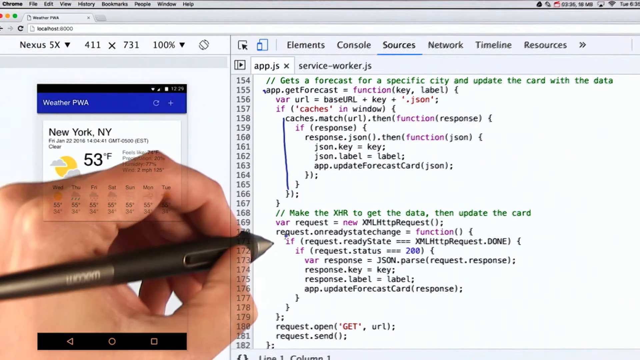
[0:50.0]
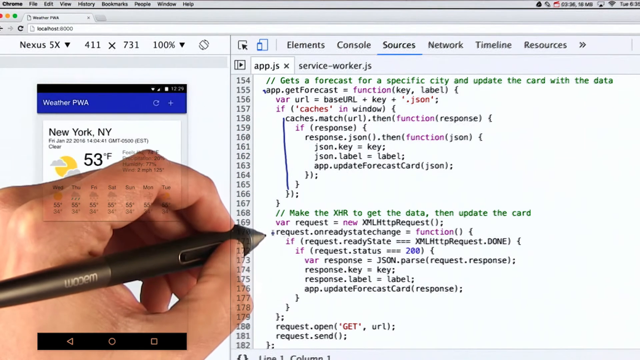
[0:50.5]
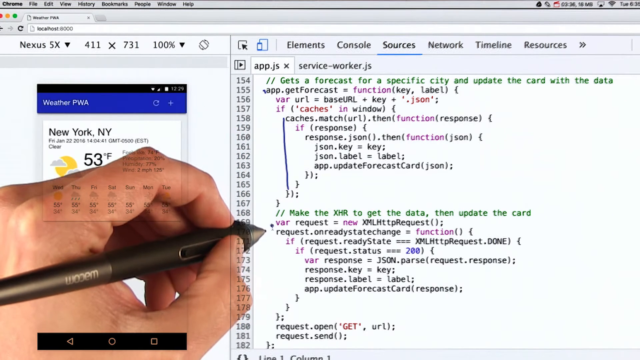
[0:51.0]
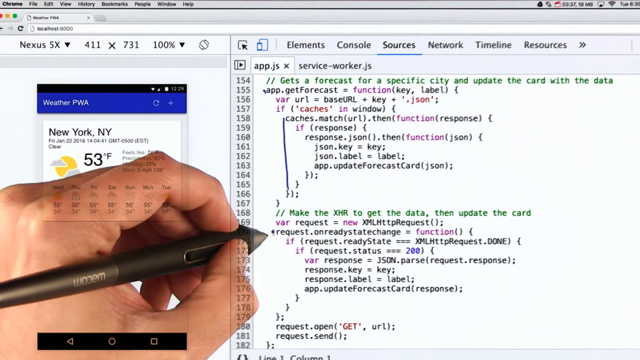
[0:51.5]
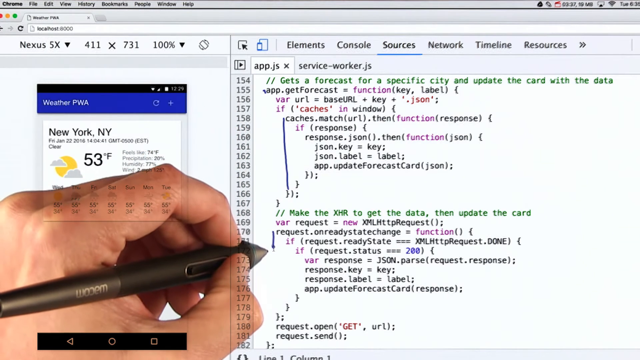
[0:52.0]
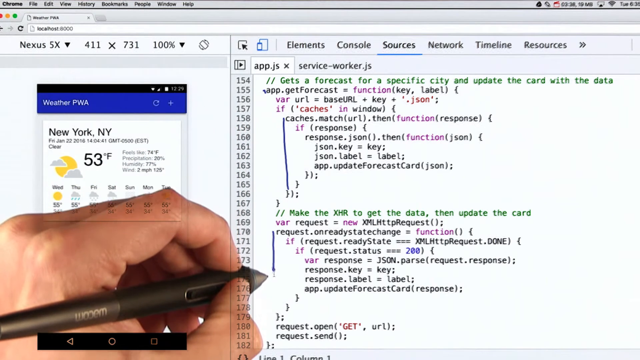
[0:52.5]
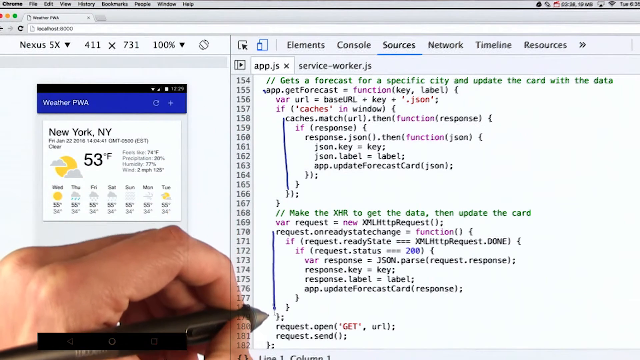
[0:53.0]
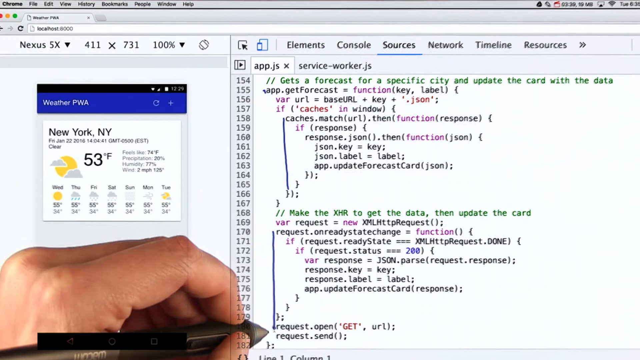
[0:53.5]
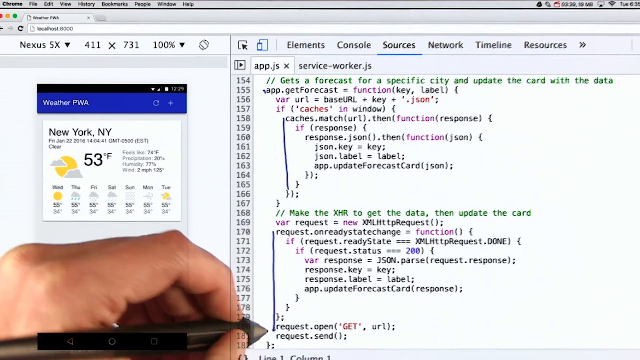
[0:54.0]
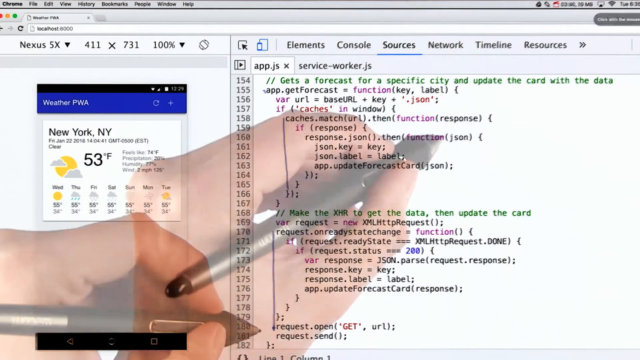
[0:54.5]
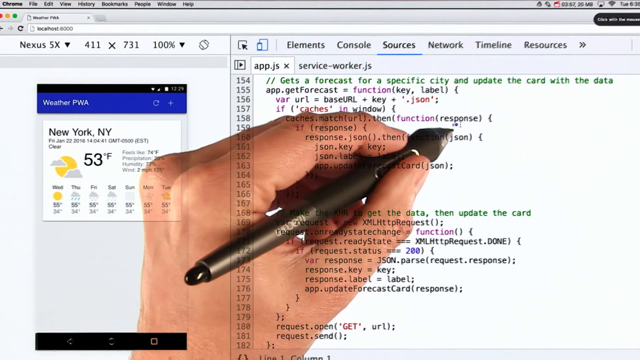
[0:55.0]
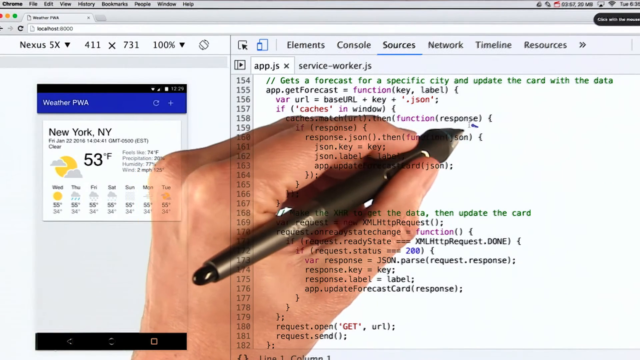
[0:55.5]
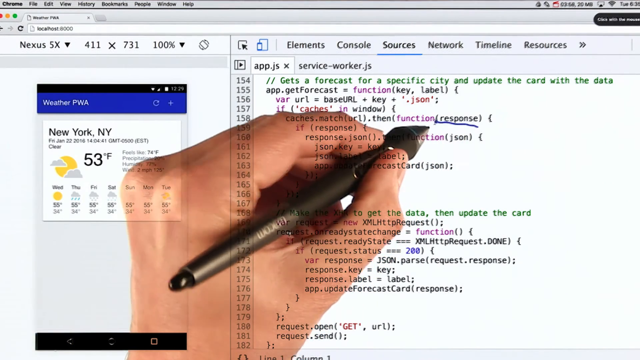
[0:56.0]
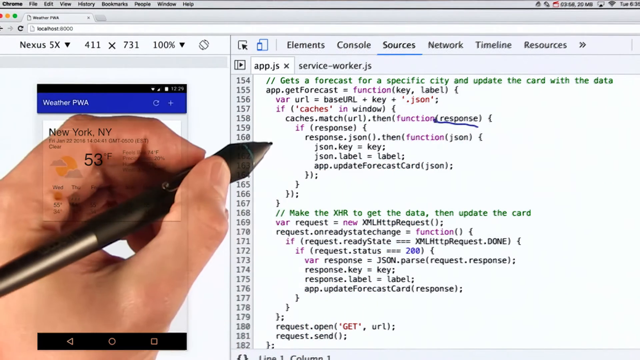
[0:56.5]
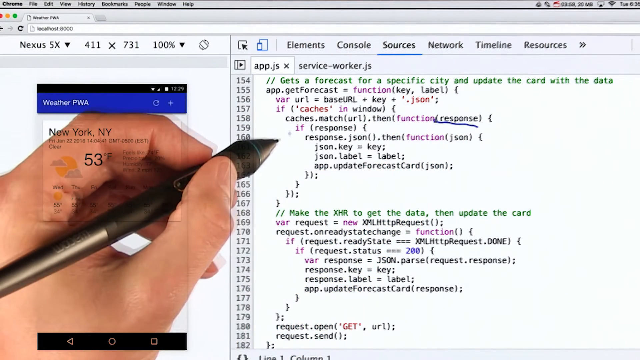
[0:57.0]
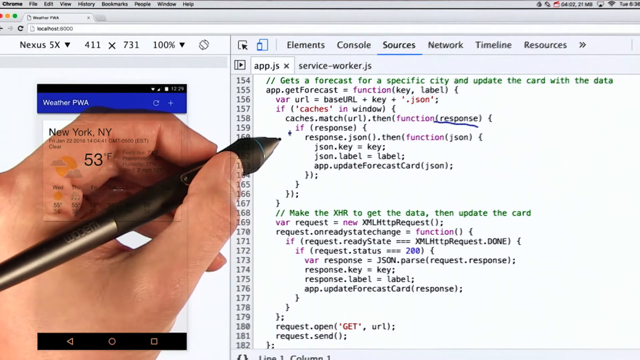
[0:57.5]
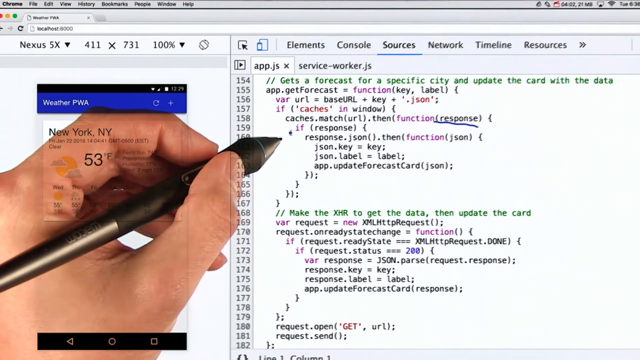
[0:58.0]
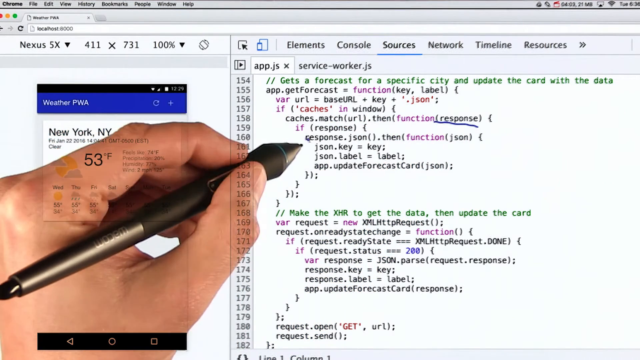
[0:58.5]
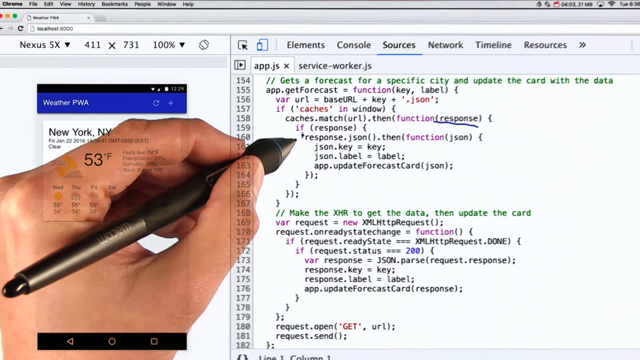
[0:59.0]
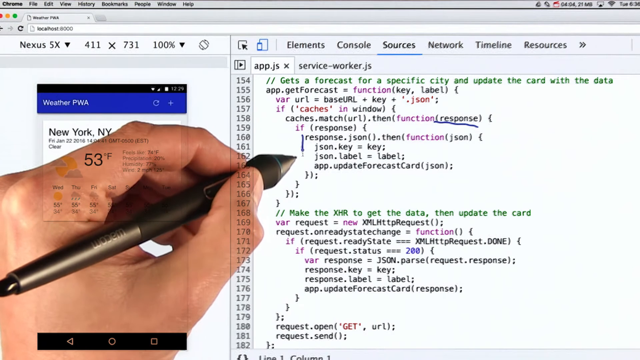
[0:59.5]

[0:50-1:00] A person's hand holds a pen and writes; it looks like he is writing on a computer screen. His hand is slightly transparent: a weather box on the left reading "New York New York" and "53 degrees Fahrenheit" shows through it, and some of the print is visible on the man's hand, as if his hand is projected onto the screen. He draws lines with the pen, connecting areas of the computer programming on the right. He underlines the word "response" and draws a line from the cache to some parentheses below, and does the same with the lower part. Moving down, he moves an arrow and moves things down the page.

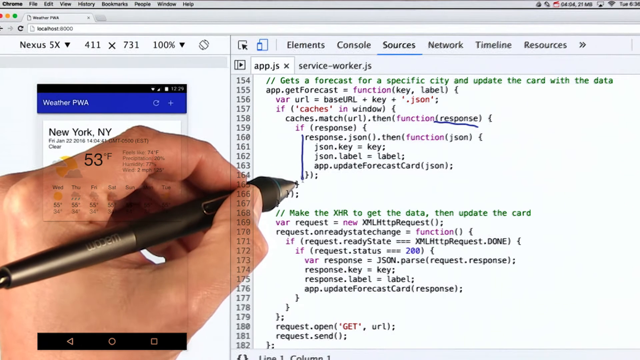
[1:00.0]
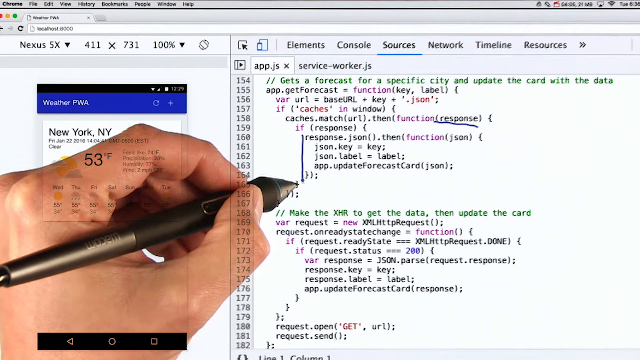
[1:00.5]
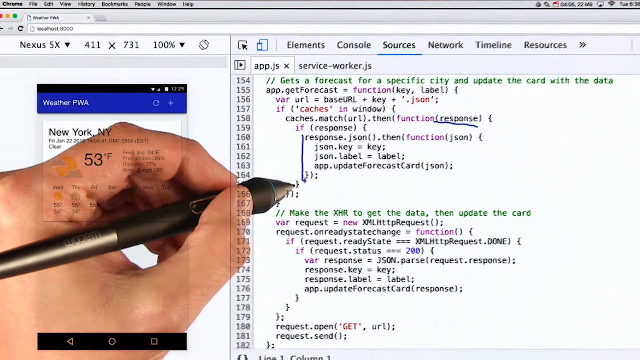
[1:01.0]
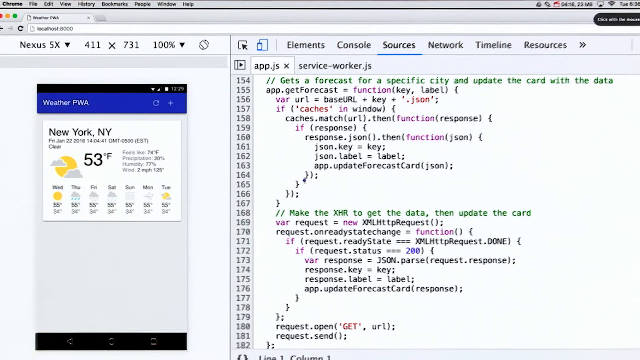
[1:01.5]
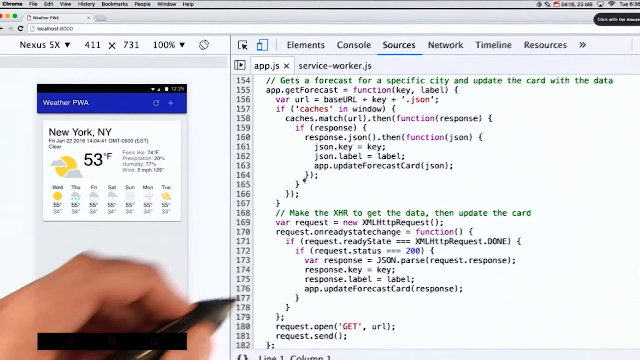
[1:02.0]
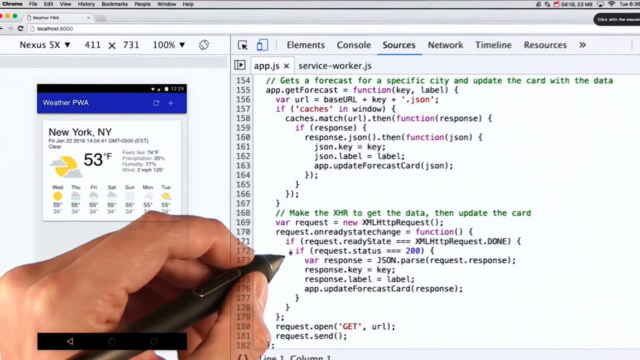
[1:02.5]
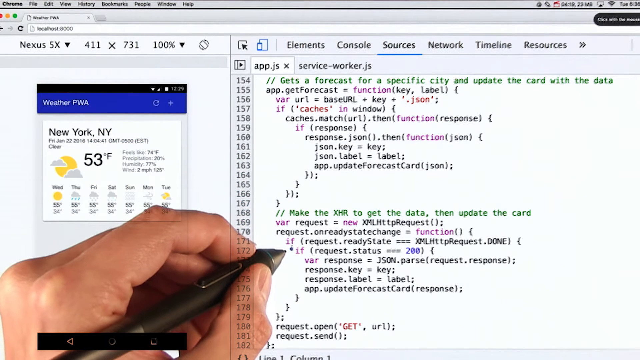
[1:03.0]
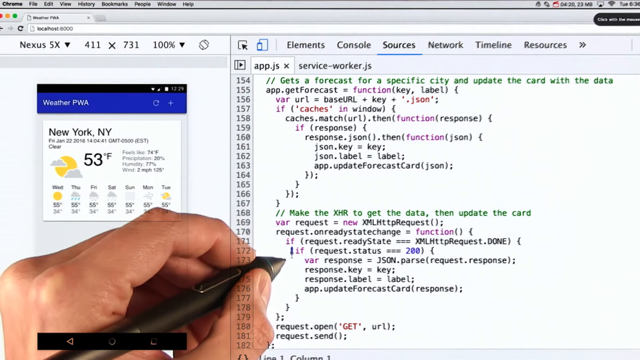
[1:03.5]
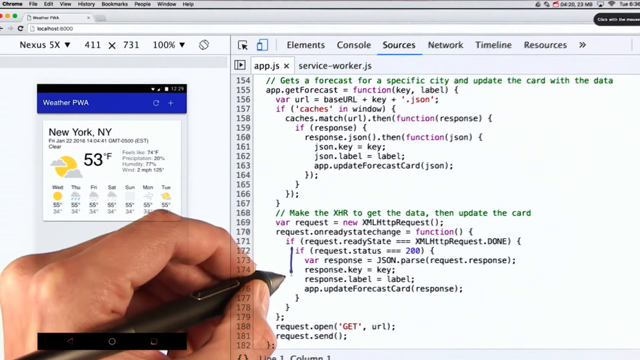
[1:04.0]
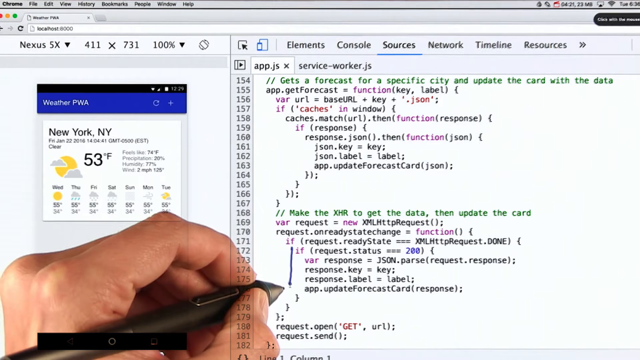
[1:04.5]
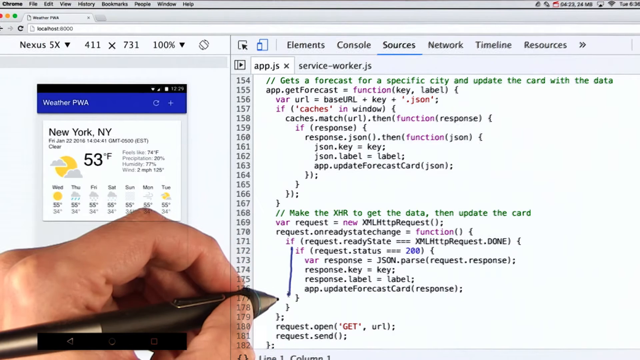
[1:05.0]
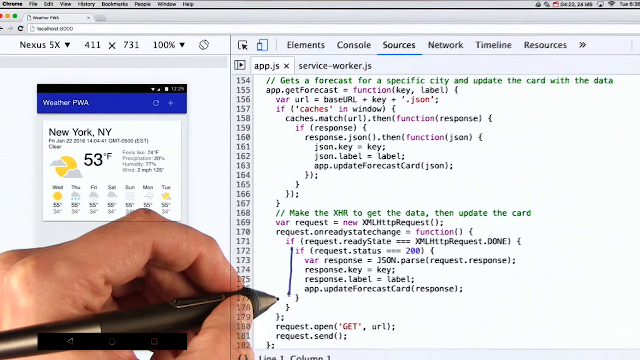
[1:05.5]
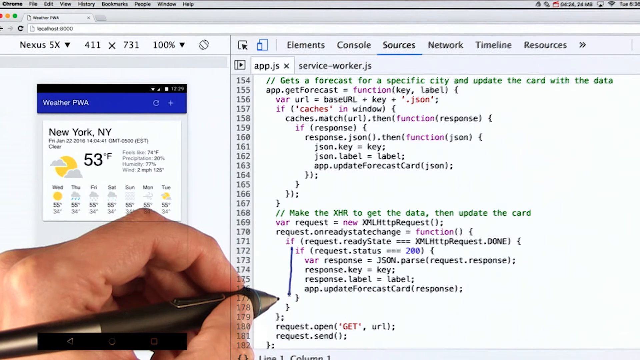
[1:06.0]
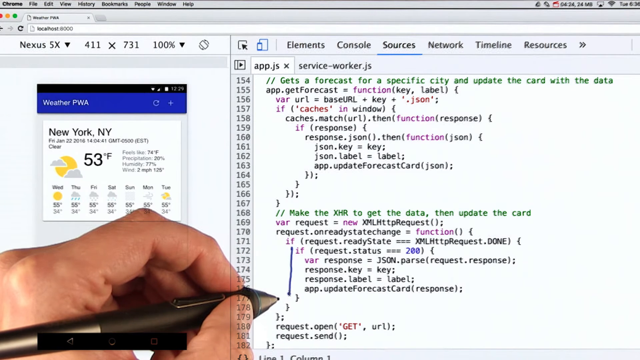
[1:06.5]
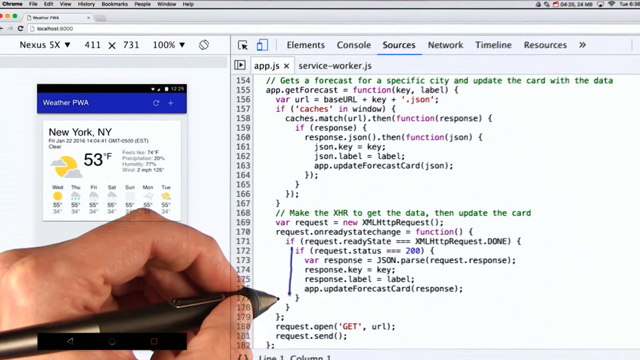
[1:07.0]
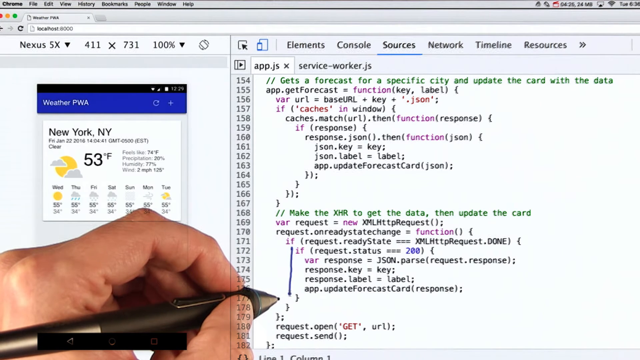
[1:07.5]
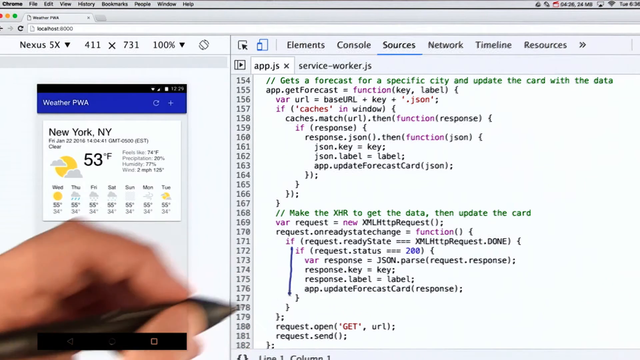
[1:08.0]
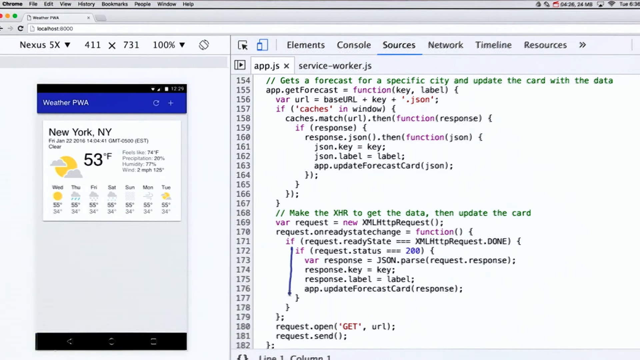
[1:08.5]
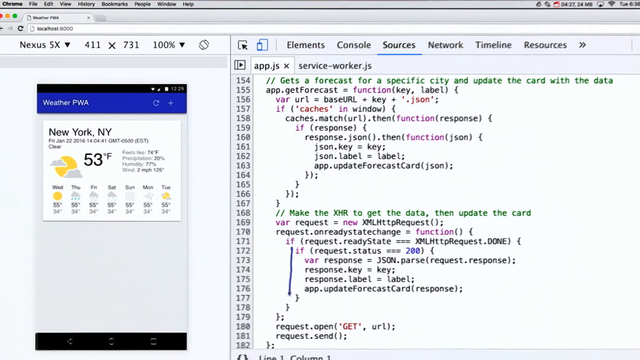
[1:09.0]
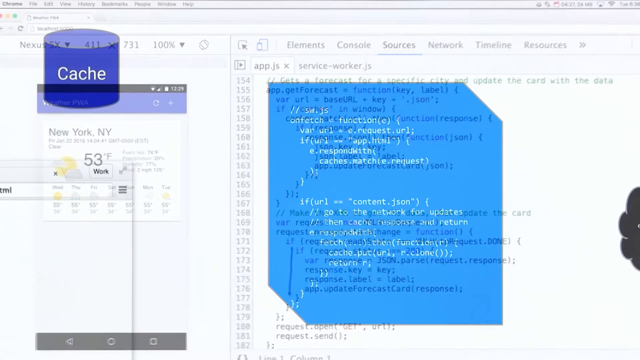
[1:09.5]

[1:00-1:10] A man's hand holds a pen on the lower left-hand side of a computer page, made to look as if he is drawing right on the computer. The hand is transparent and see-through: the numbers on the side show right through his thumb, and a box reading "New York, New York" and "53 degrees" appears on his hand. He continues using the pen to connect two parts of the computer programming listed in that area.